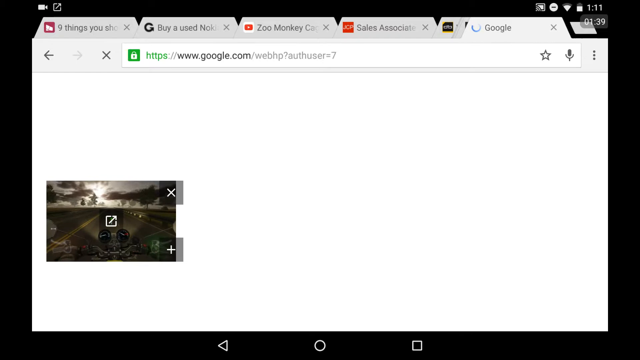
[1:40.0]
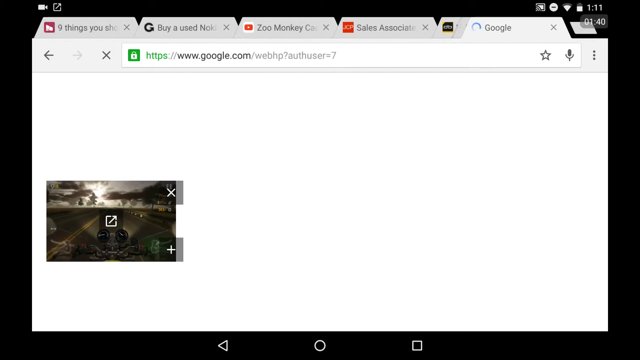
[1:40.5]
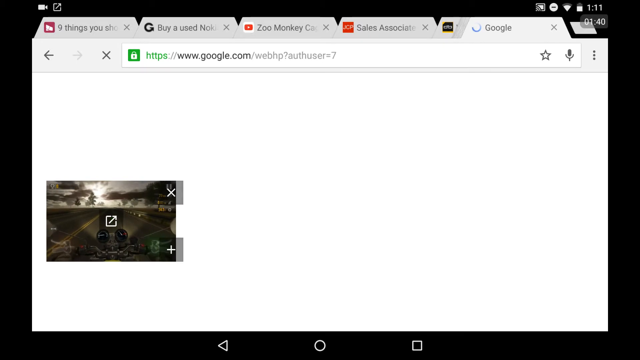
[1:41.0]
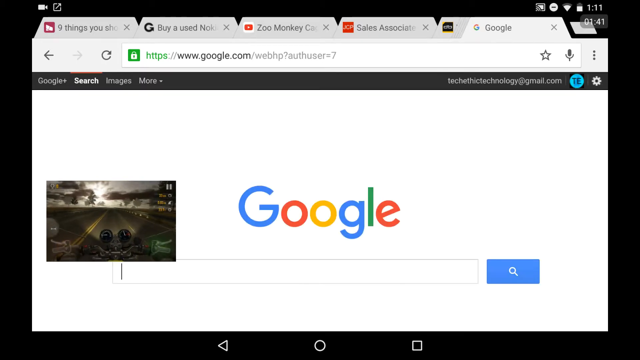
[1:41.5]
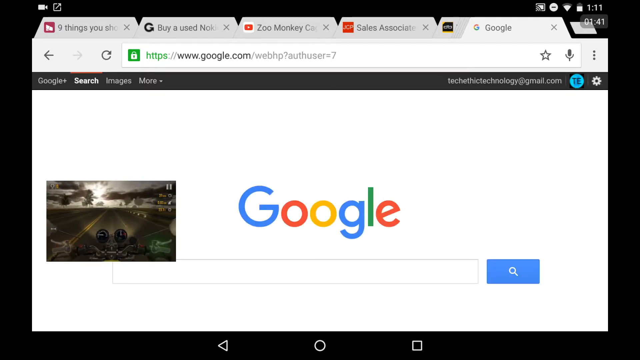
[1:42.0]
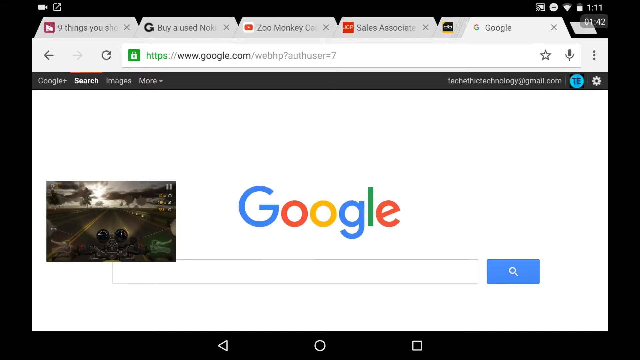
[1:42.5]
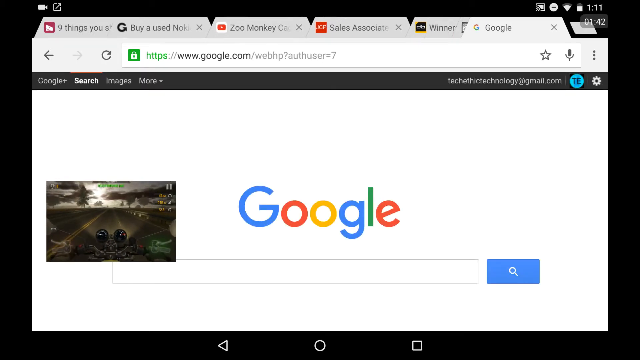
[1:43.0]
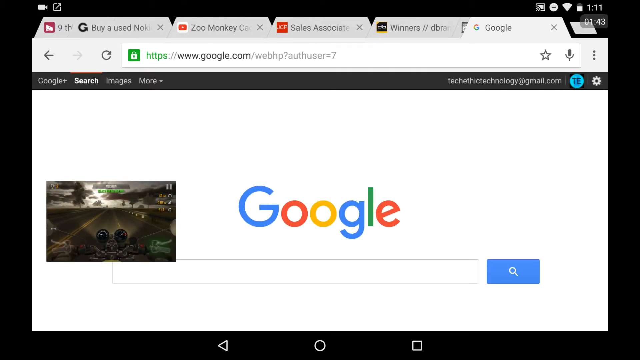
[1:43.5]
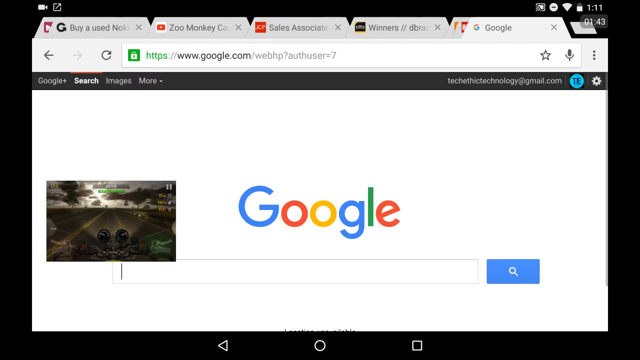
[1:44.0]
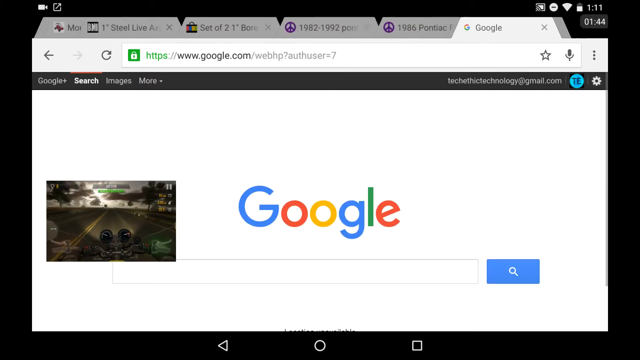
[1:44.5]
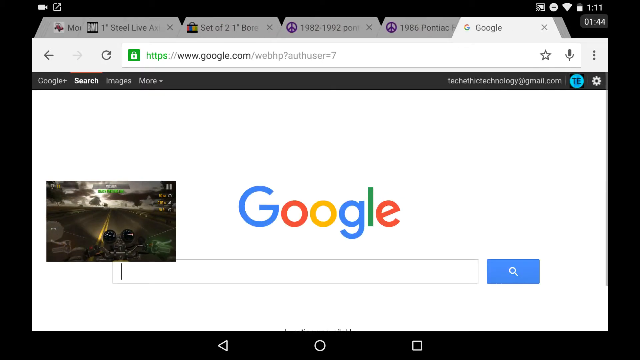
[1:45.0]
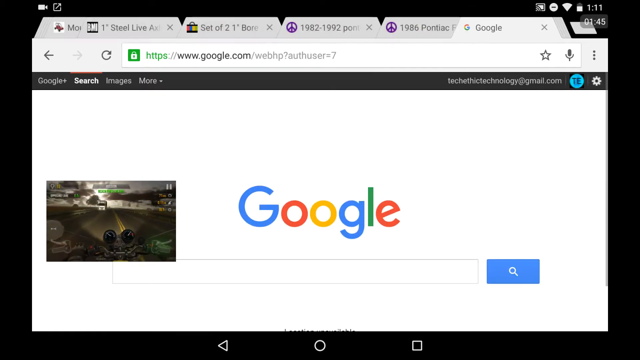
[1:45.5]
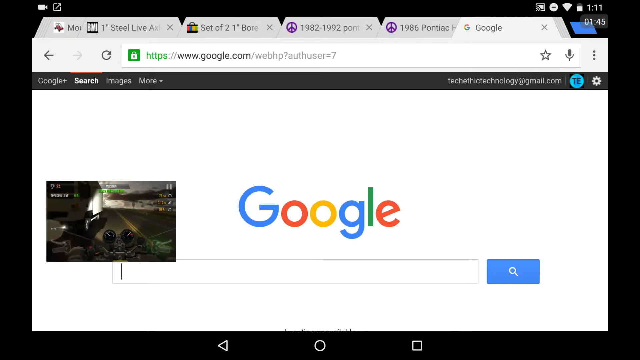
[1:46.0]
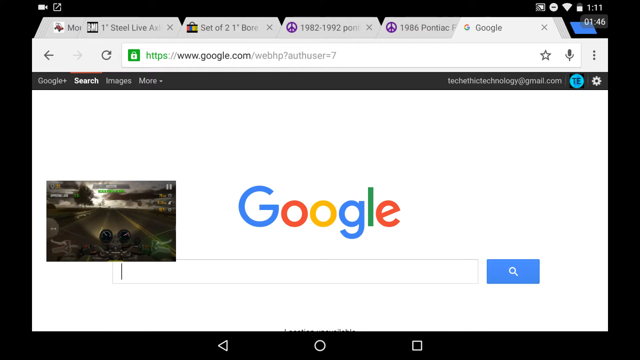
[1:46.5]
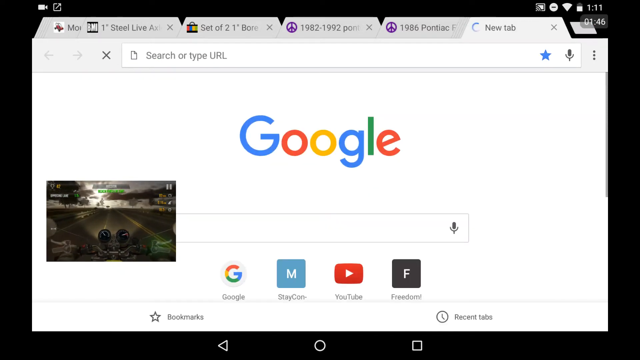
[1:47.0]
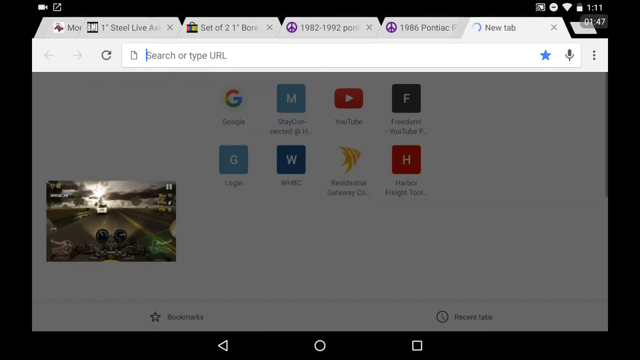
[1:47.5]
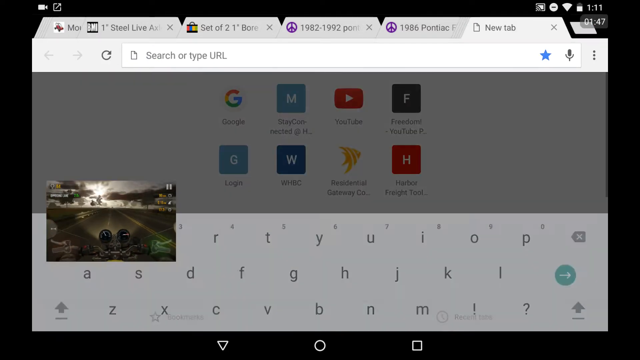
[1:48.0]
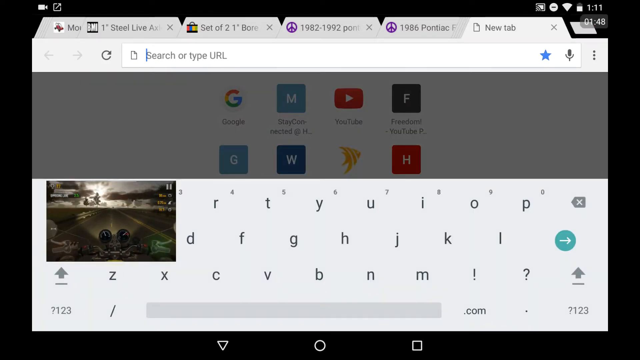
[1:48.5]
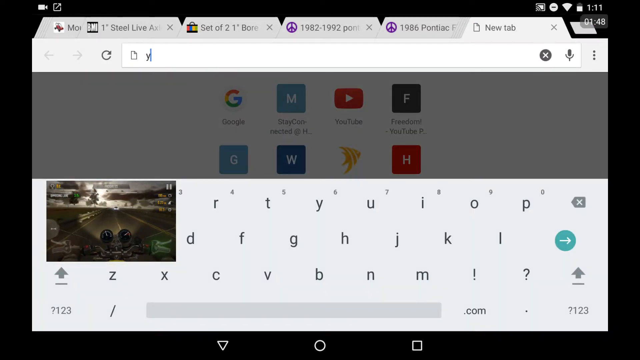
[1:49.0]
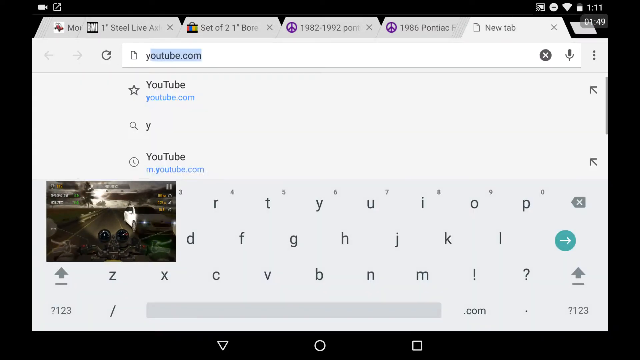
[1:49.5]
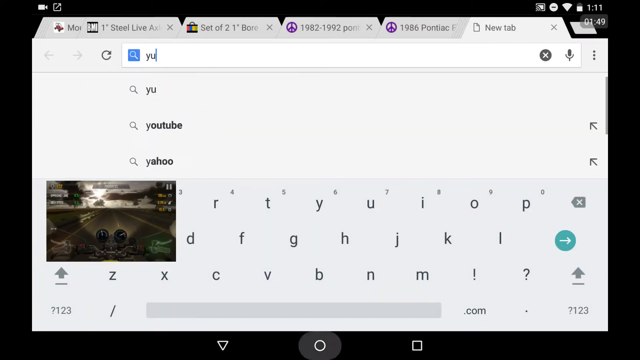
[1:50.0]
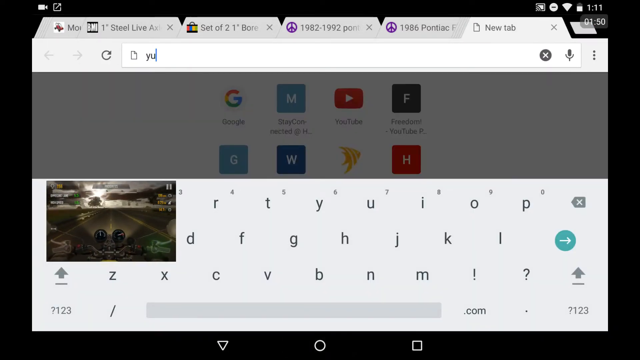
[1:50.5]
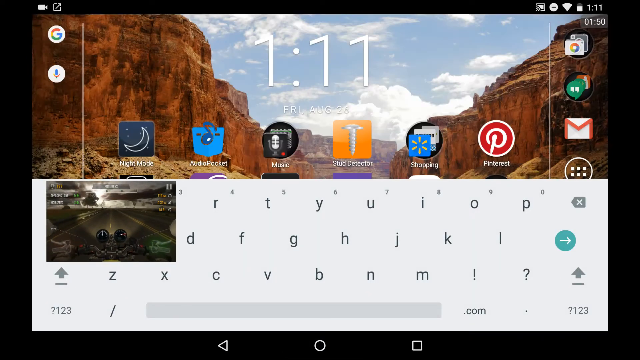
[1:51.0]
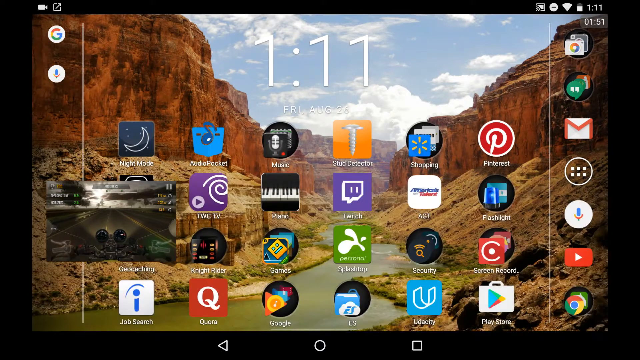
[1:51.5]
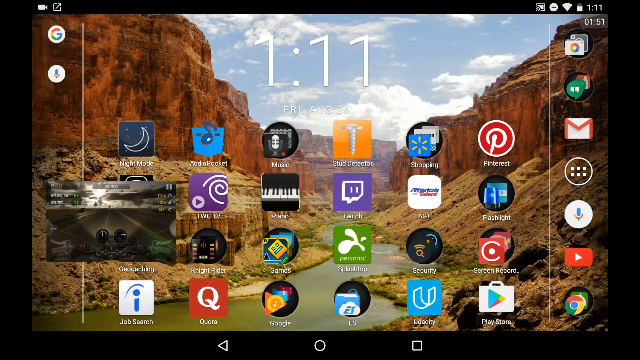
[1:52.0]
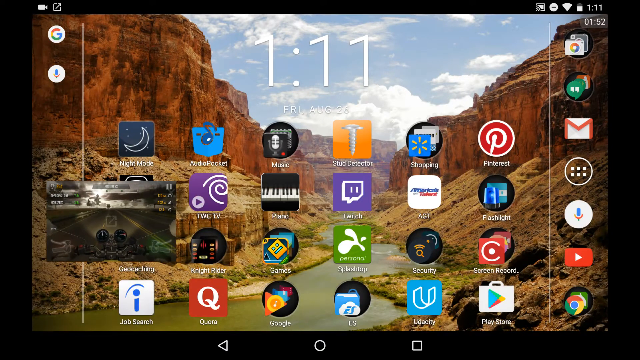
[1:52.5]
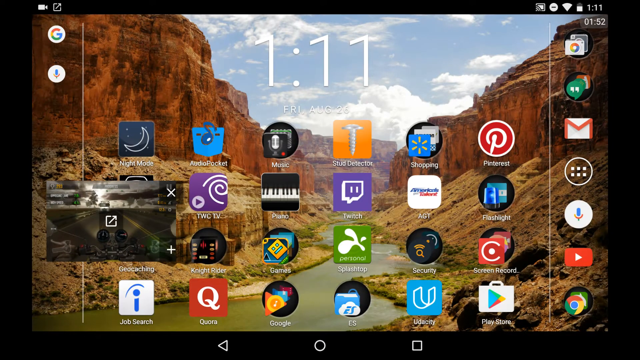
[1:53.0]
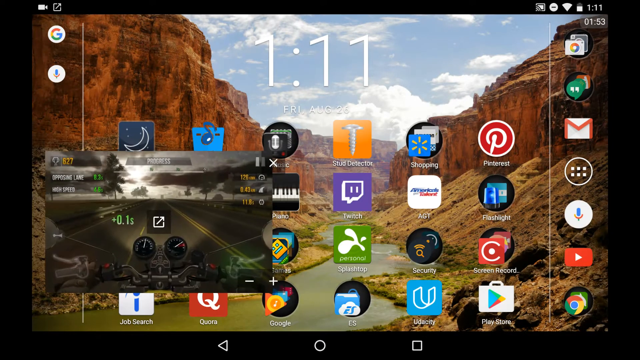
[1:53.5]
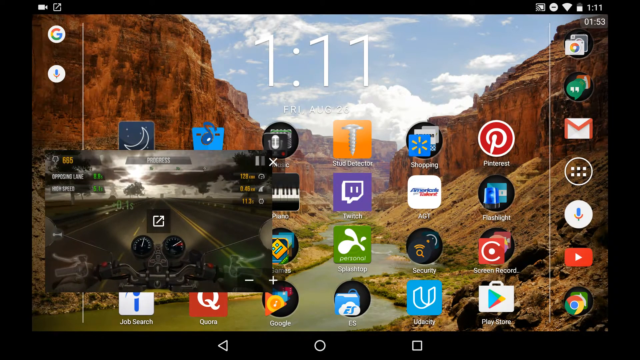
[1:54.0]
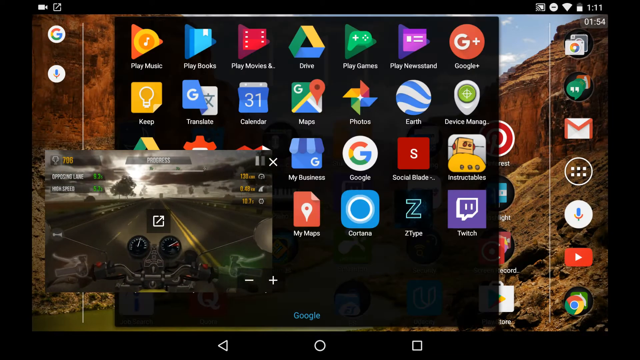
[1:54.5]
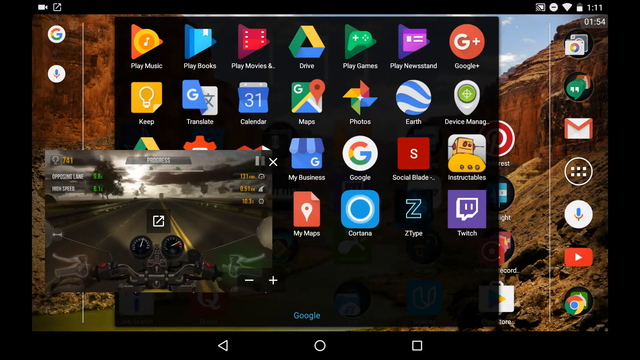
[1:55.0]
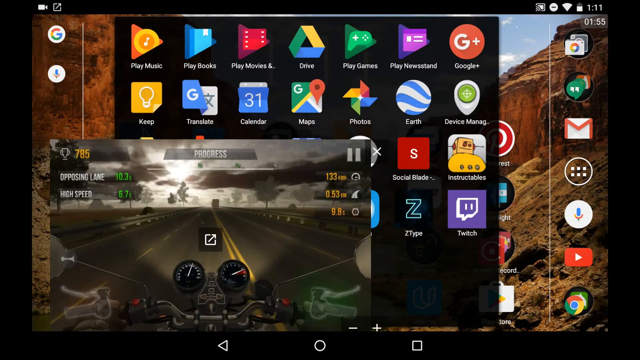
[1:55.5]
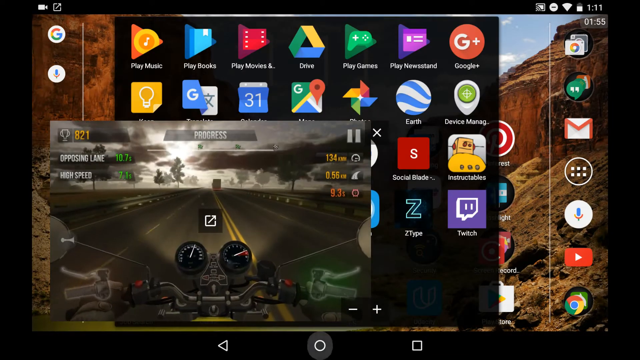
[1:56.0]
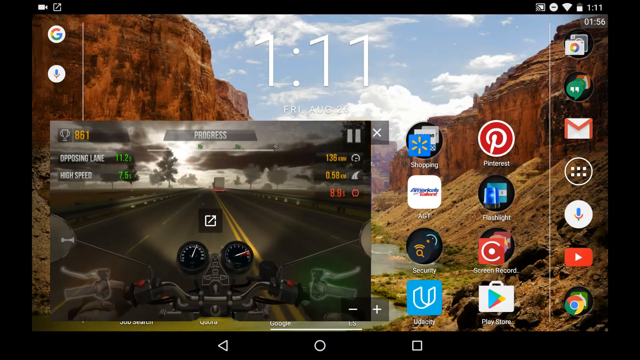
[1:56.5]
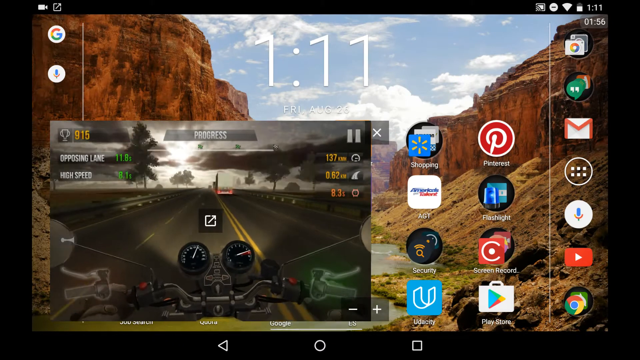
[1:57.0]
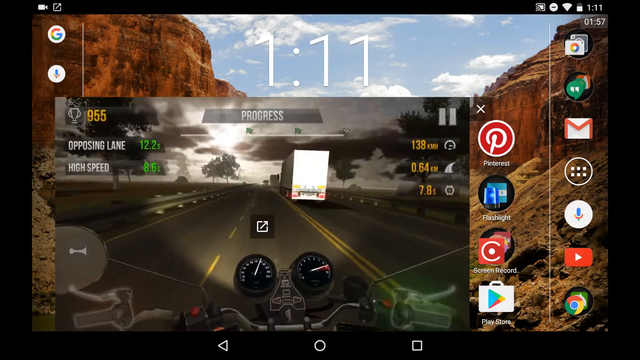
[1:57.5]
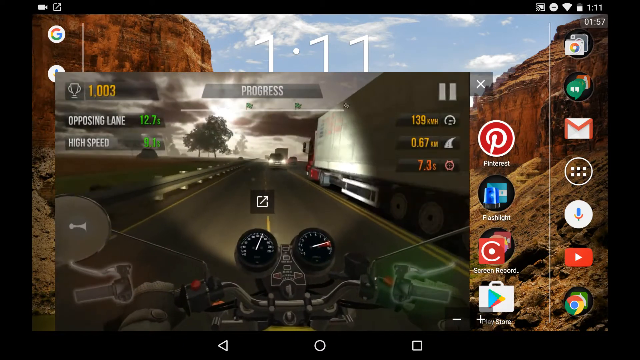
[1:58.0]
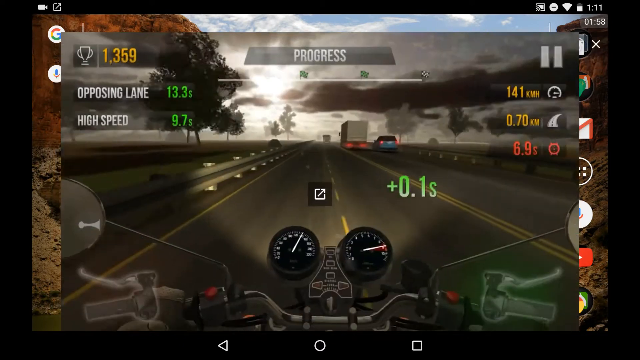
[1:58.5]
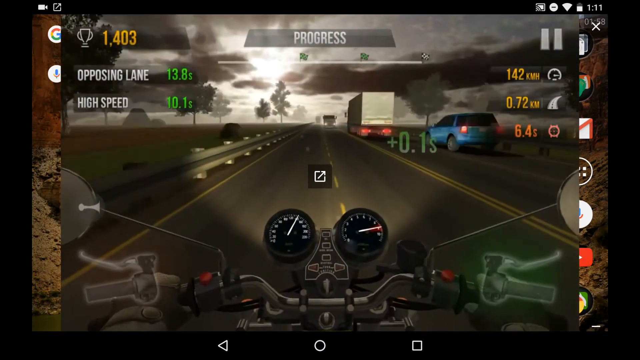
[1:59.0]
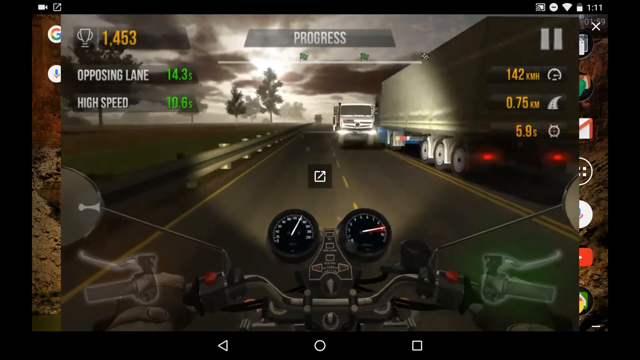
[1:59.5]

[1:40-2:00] The web browser page loads to the Google home page with a blank Google search bar. In the bottom left-hand side of the screen is a minimized thumbnail of the Traffic Rider app, showing a motorcycle speeding along a highway with its headlights on. It is on the right side of the road, then gradually moves to its left, nearly missing a semi-truck on the opposite side of the yellow line. The user moves another lane over to his left to avoid an oncoming white sedan and is now driving on the opposite side of the road. The user grabs the thumbnail and expands it slightly. In the background, the laptop's menu screen opens, showing all of the icons behind it. The user grabs the Traffic Rider screen again and expands it slightly more. The motorcycle weaves in and out of traffic on the opposite side of the road, nearly misses another car, and starts to veer back toward the correct side of the road on the right.